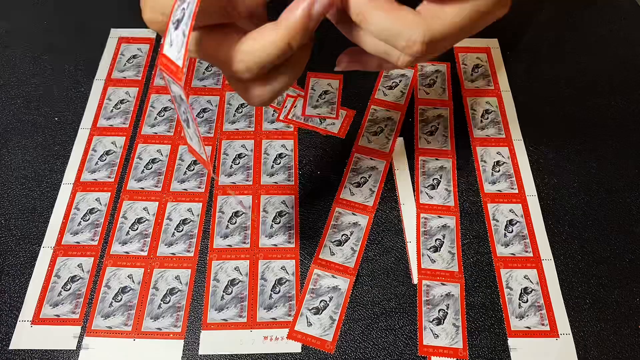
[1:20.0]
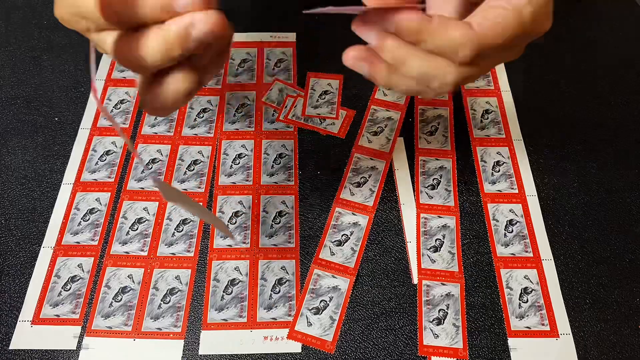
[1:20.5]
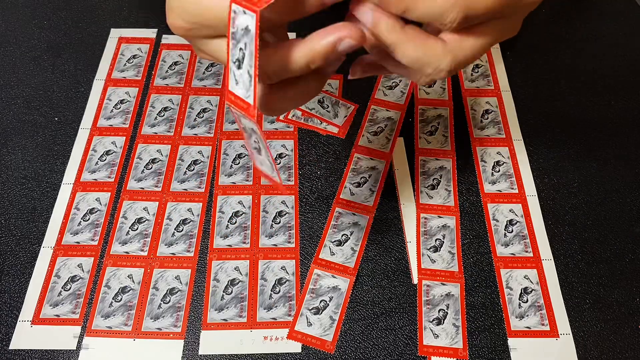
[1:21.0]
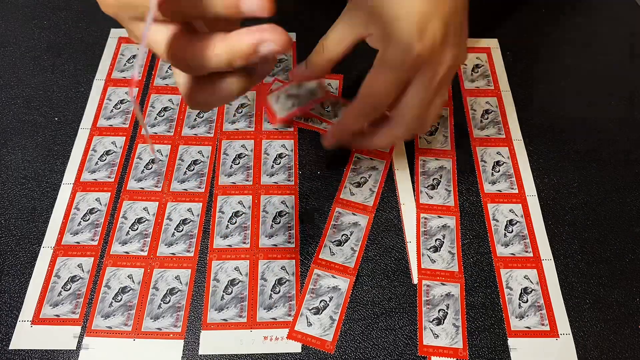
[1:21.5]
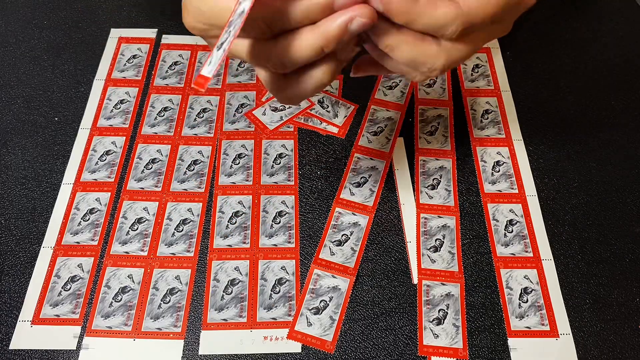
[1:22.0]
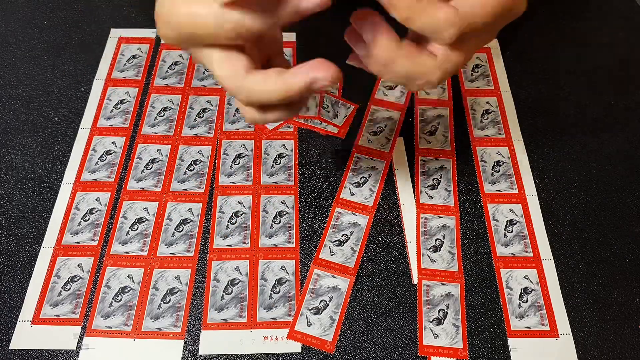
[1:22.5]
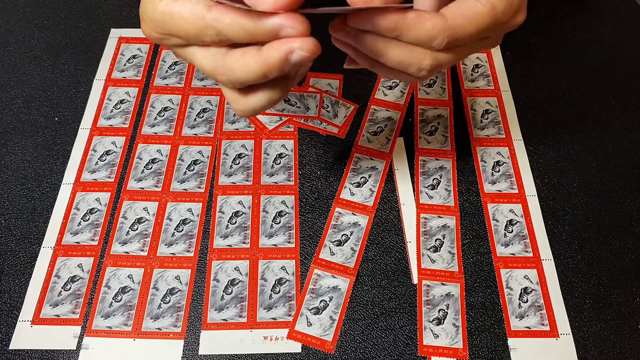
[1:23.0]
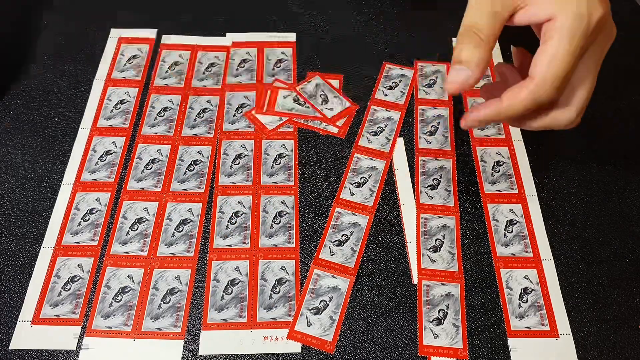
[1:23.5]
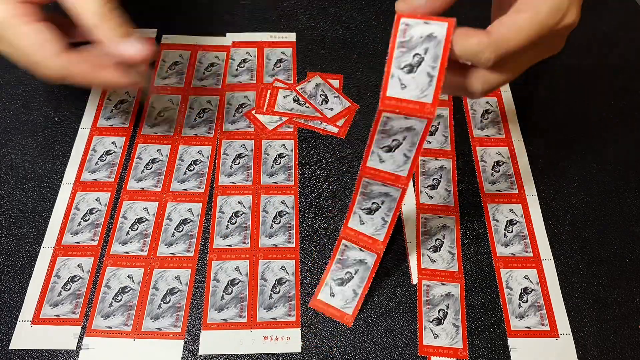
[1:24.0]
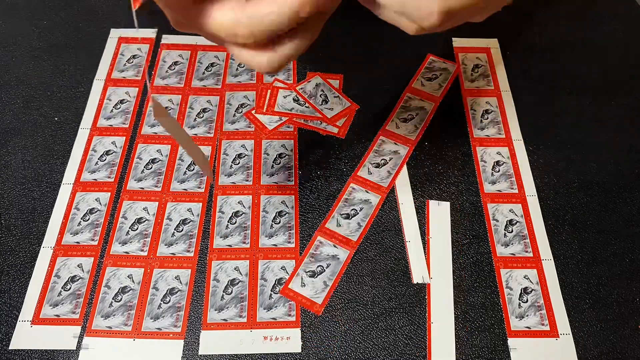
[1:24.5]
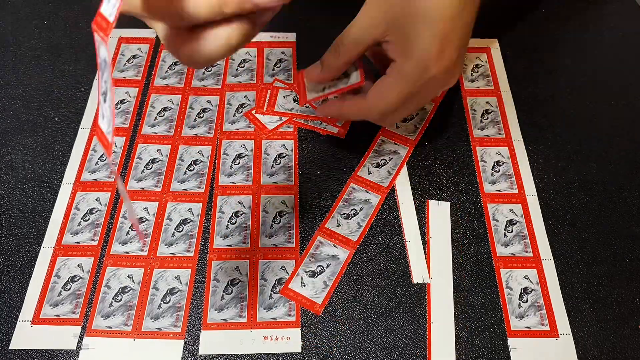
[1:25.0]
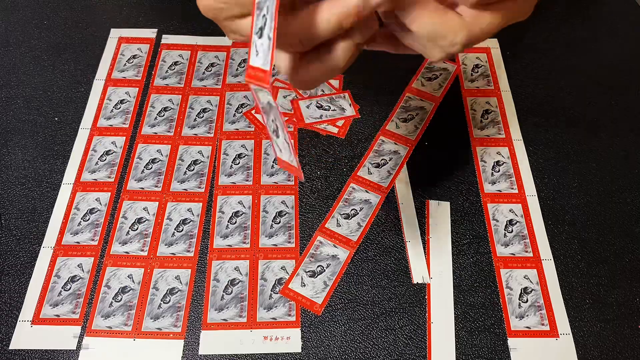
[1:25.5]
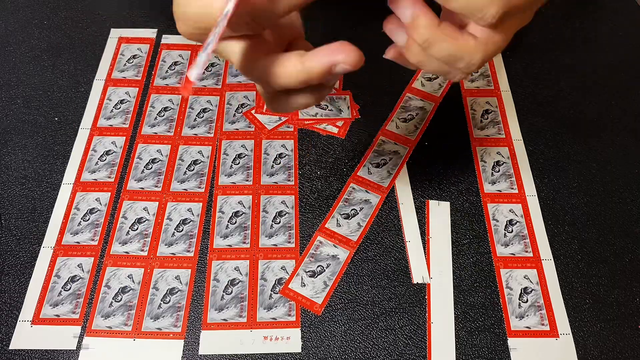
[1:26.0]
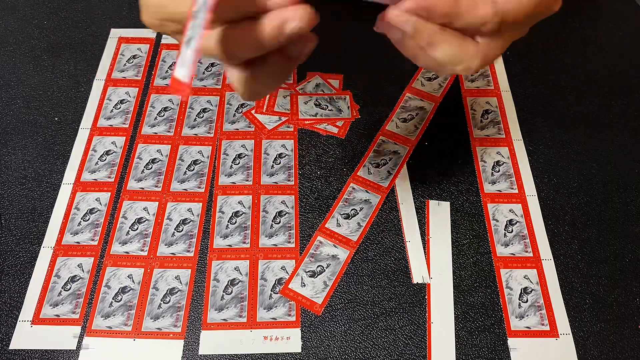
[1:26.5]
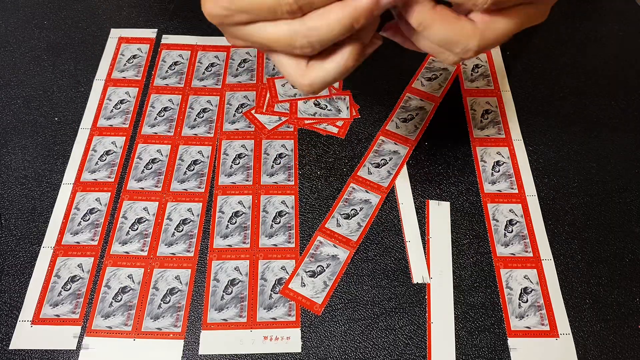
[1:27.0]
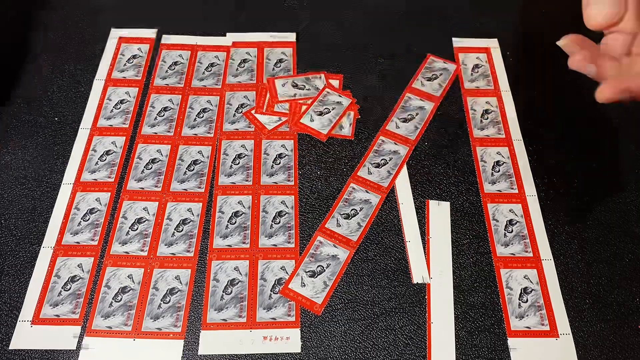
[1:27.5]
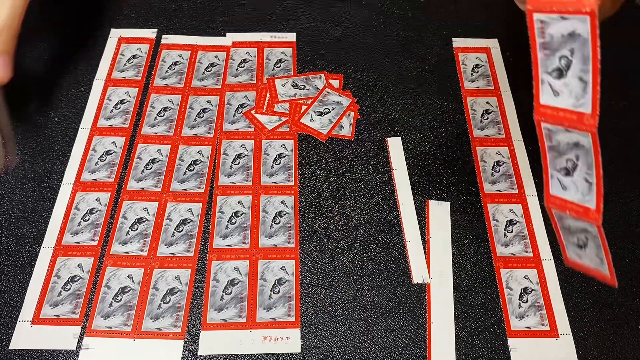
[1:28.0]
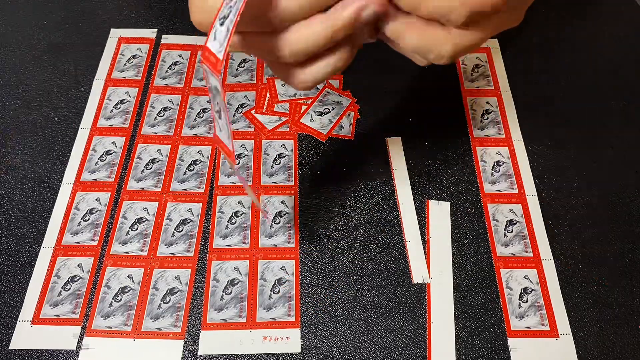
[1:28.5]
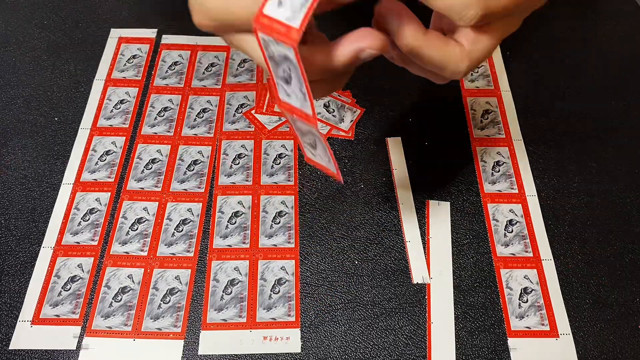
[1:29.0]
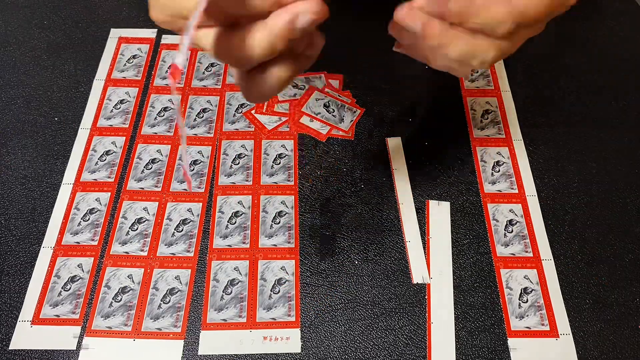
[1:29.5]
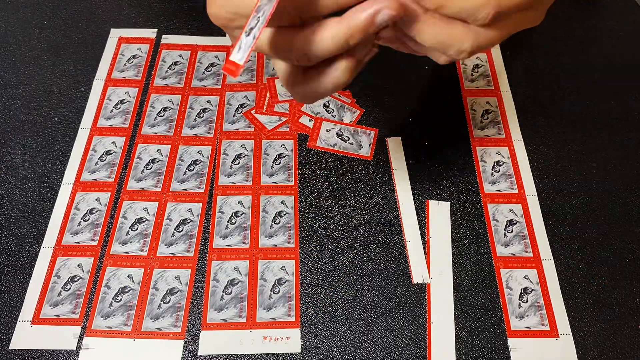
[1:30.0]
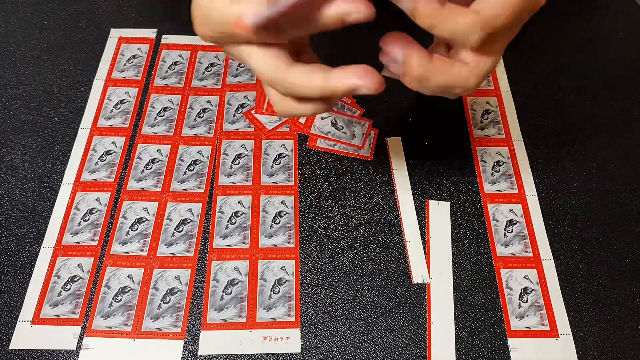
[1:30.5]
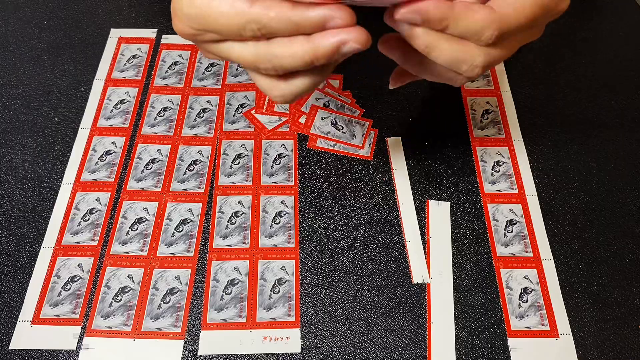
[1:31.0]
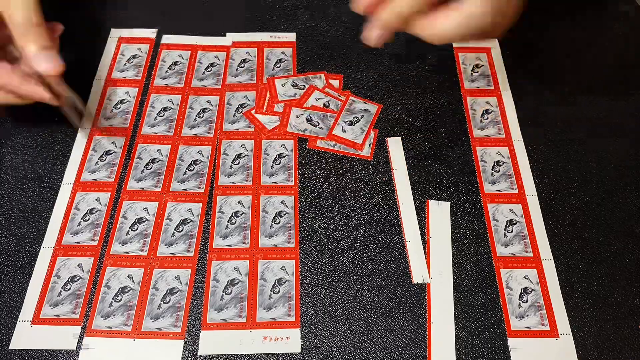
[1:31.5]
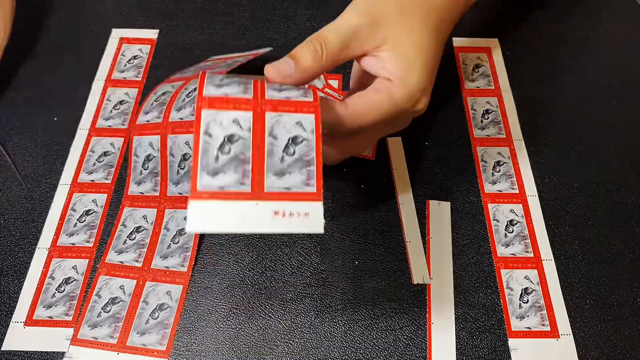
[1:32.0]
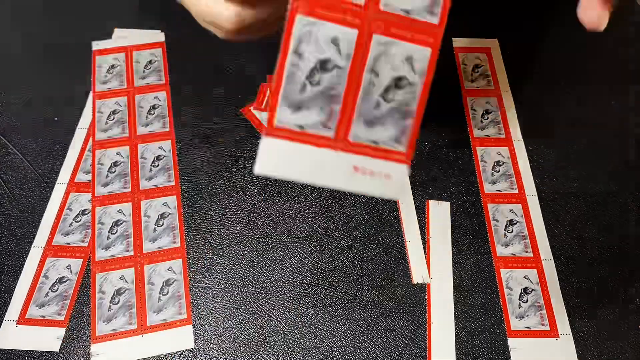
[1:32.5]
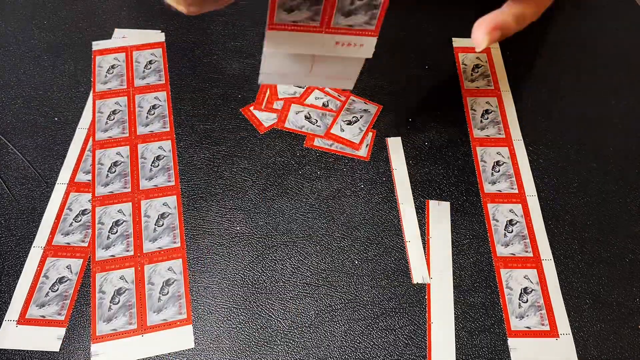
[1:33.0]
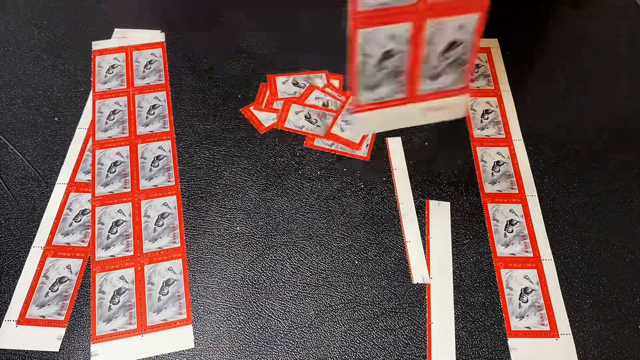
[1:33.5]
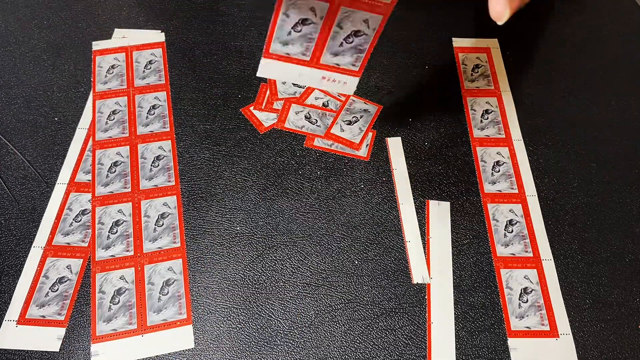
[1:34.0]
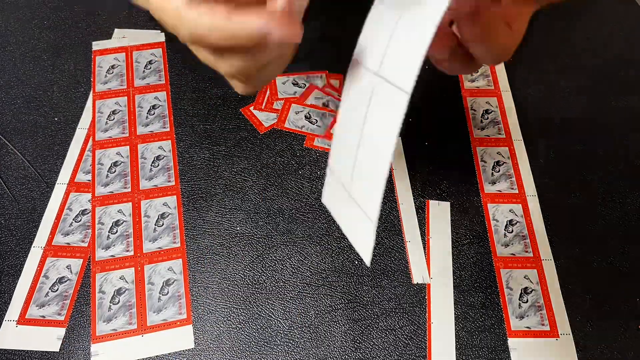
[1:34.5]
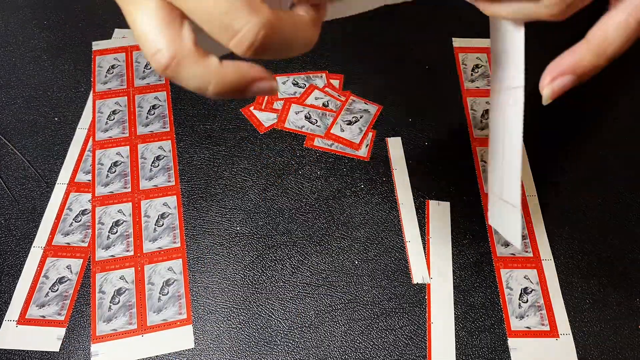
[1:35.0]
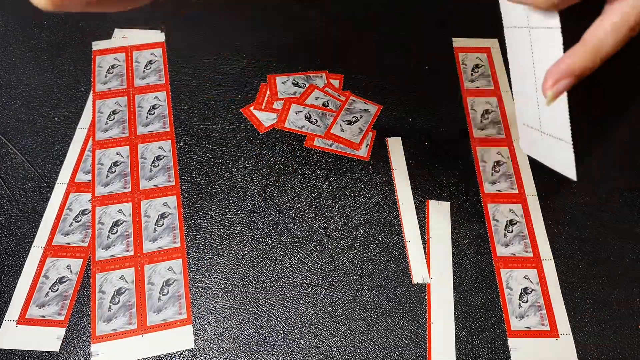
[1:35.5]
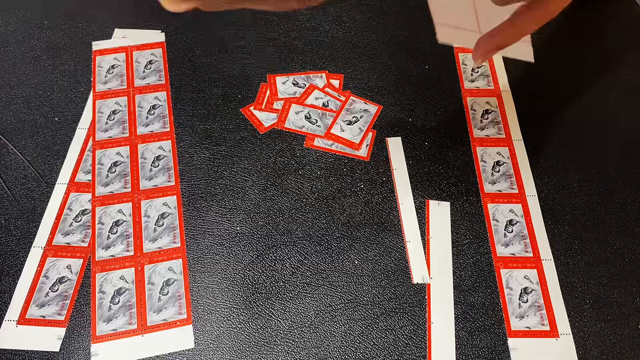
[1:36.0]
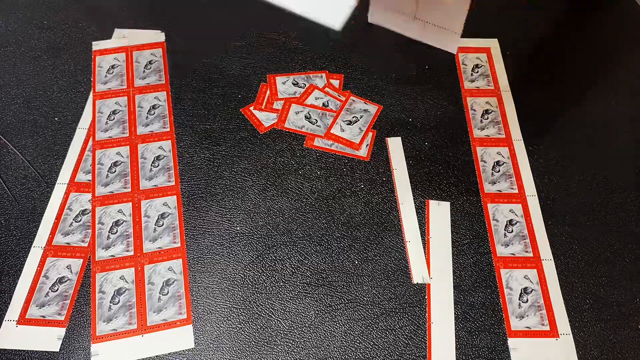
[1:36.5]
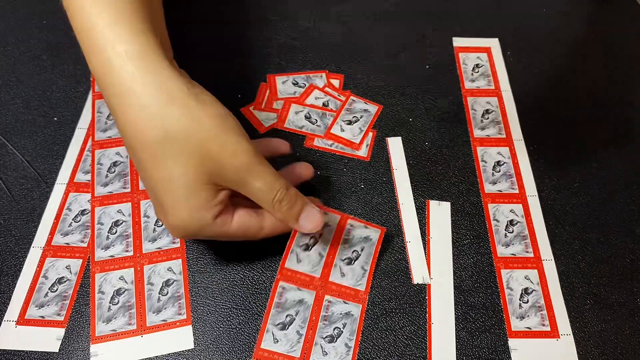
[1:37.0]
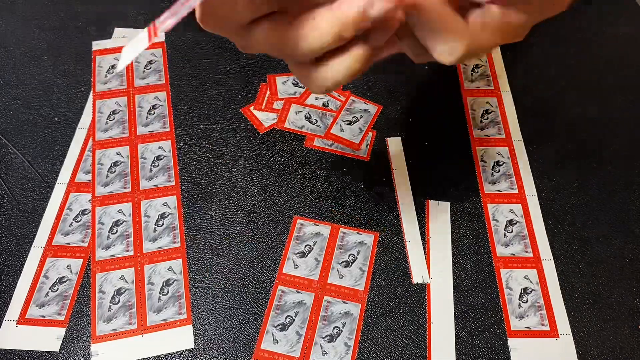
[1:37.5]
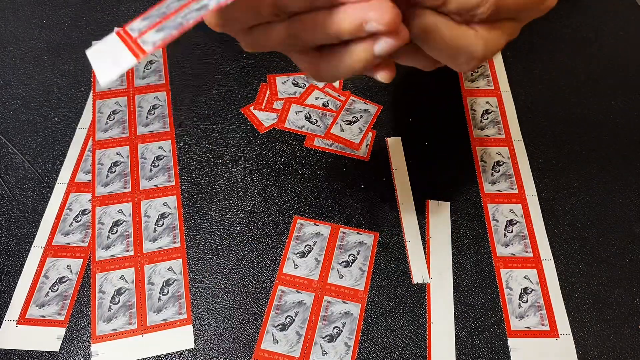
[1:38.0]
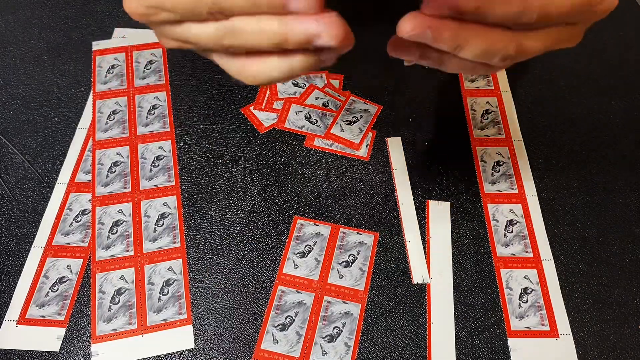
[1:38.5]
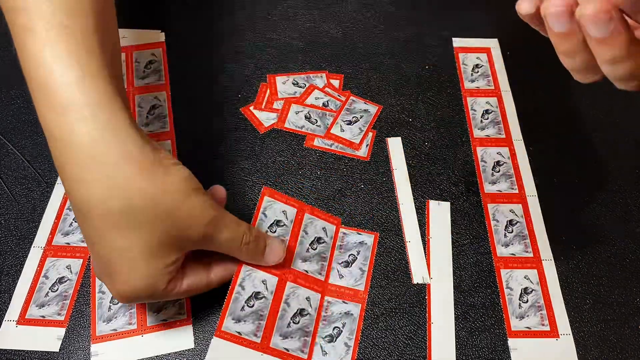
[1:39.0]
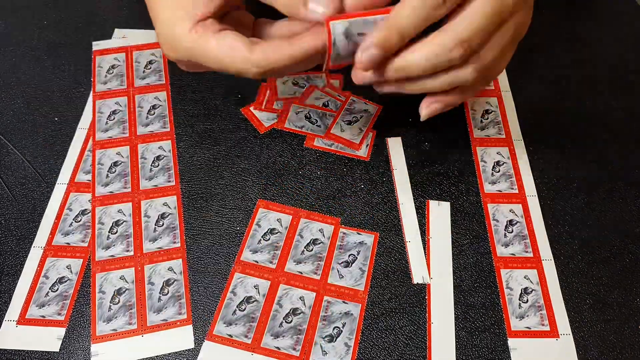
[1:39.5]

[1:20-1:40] He continues taking the strips of images and tearing them into single units. Starting with the leftmost column, he rips off each individual image one by one and places them in a pile. He takes another strip that he ripped apart earlier and does the same, ripping it into individual units one by one. He then takes the third strip and uses his hands to tear it into individual pieces, placing them into a single pile. Next he takes one of the two by five pieces of paper he cut out earlier and folds and unfolds it to crease it. Slightly off camera, he cuts the paper into segments: a two by two piece, another two by two, and a two by one.